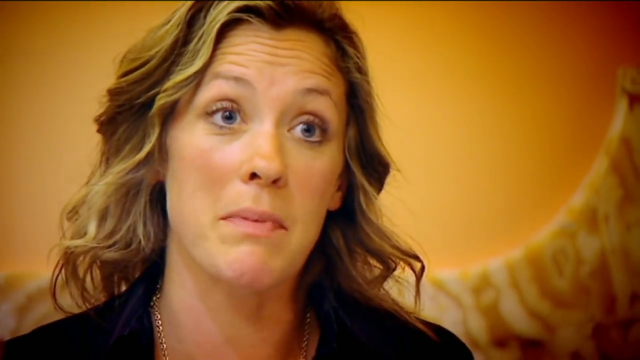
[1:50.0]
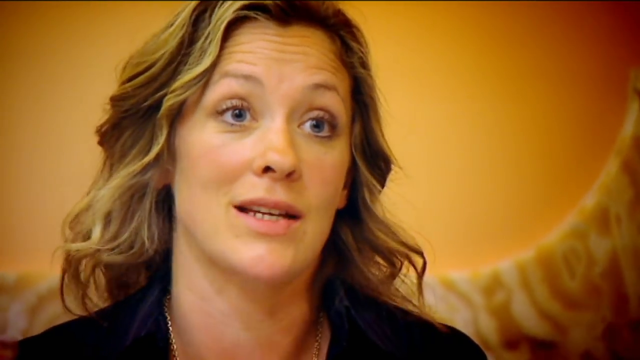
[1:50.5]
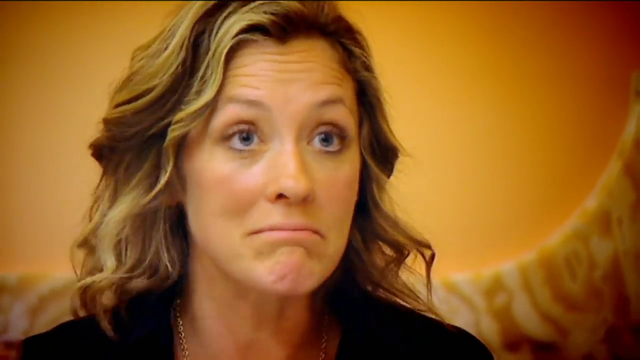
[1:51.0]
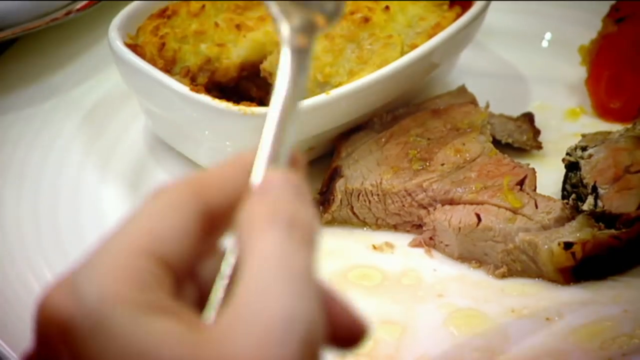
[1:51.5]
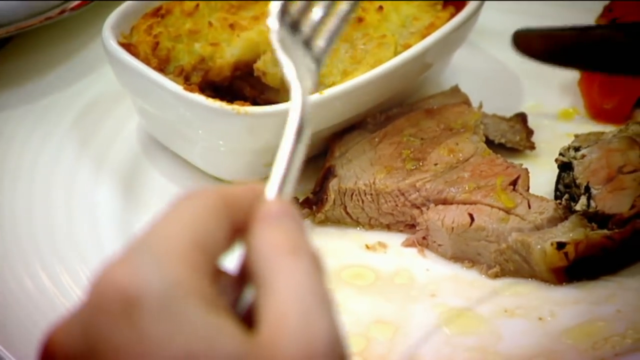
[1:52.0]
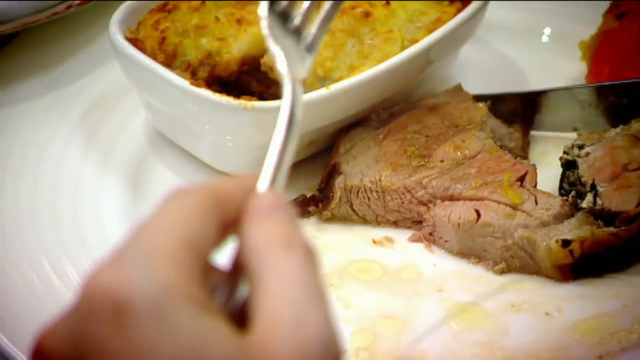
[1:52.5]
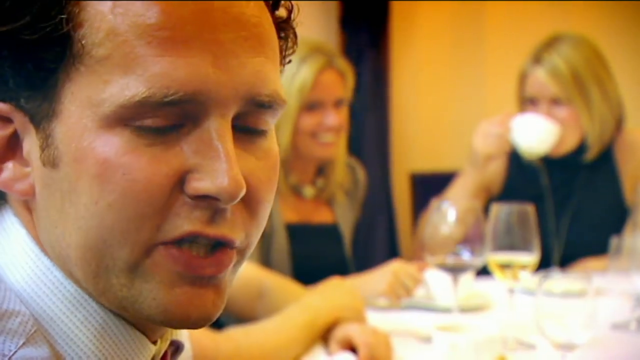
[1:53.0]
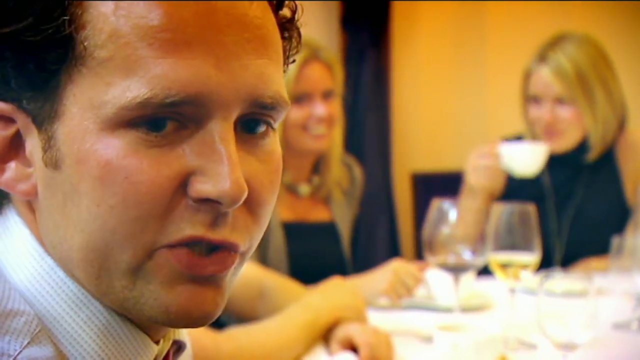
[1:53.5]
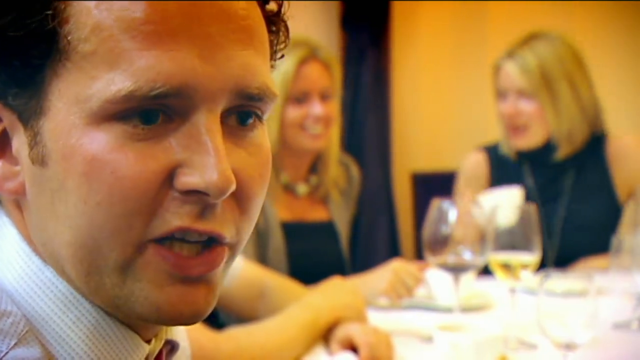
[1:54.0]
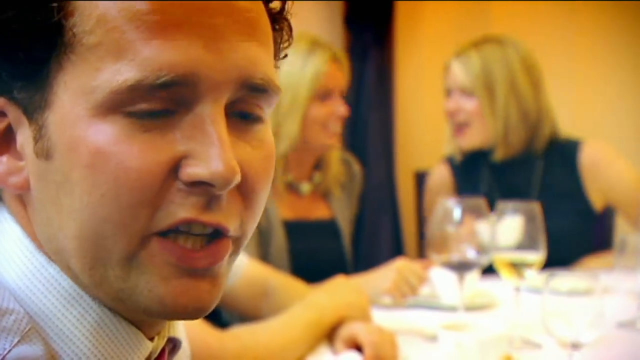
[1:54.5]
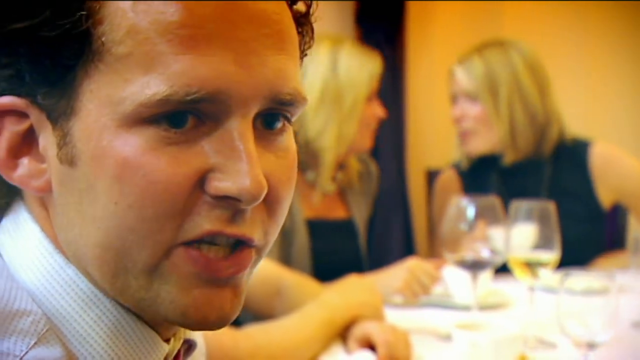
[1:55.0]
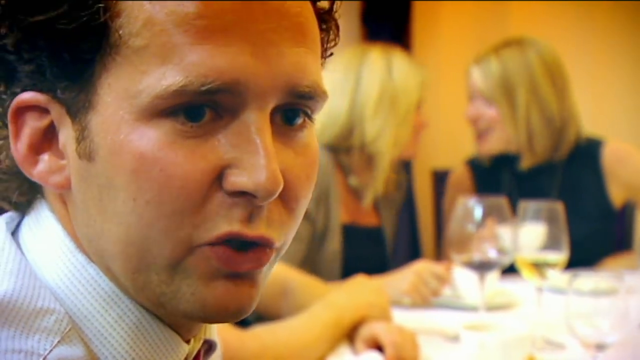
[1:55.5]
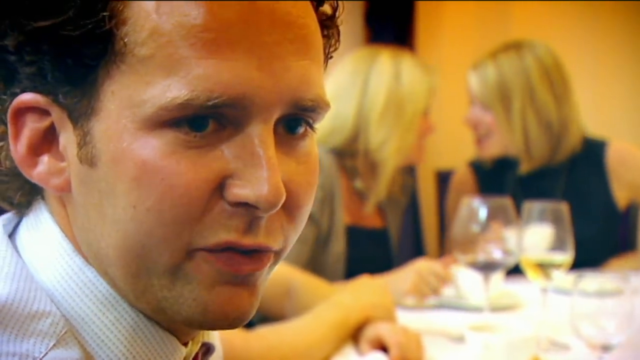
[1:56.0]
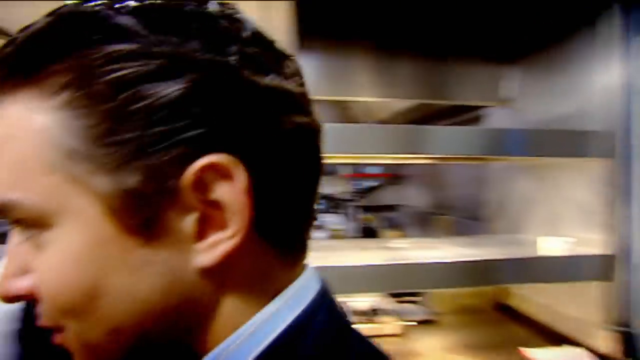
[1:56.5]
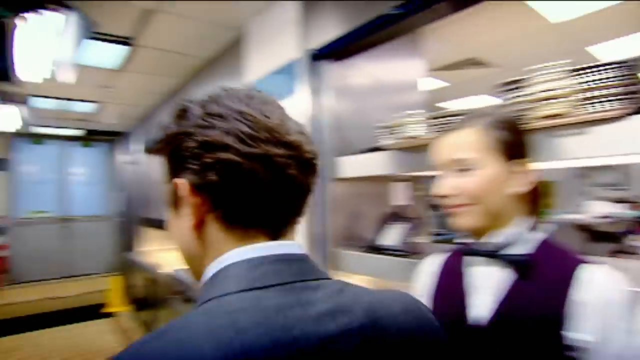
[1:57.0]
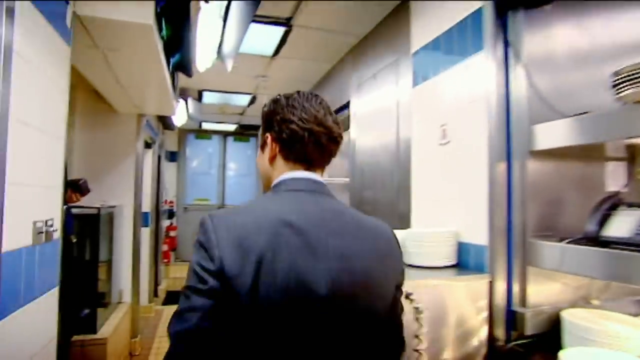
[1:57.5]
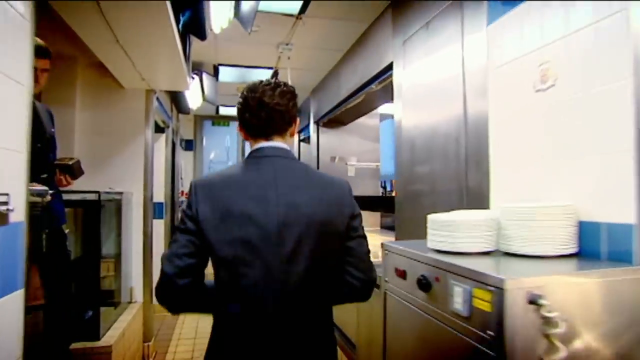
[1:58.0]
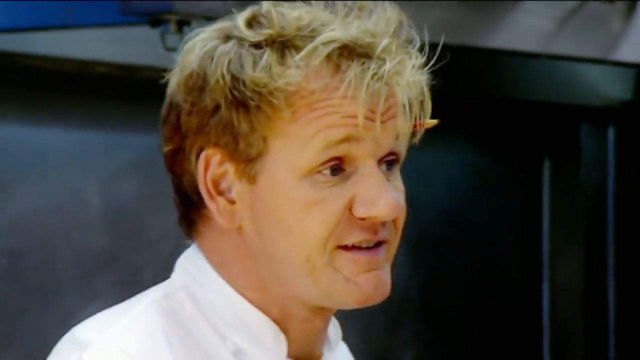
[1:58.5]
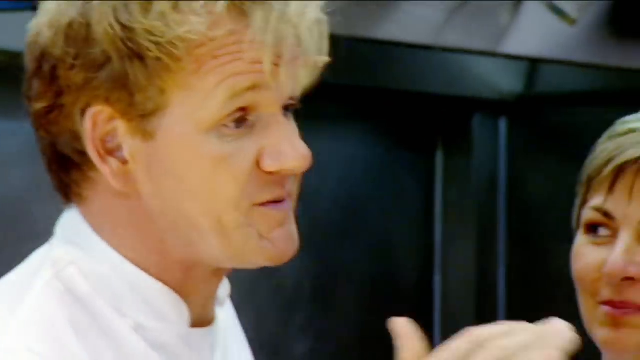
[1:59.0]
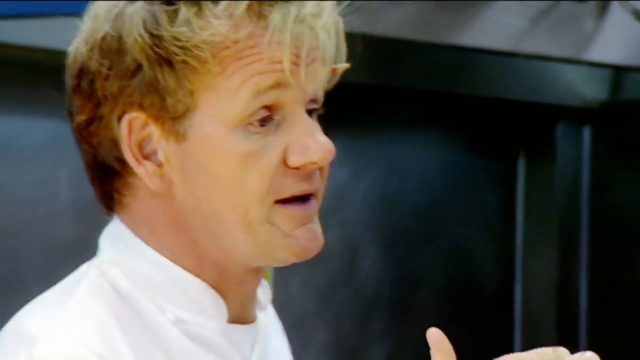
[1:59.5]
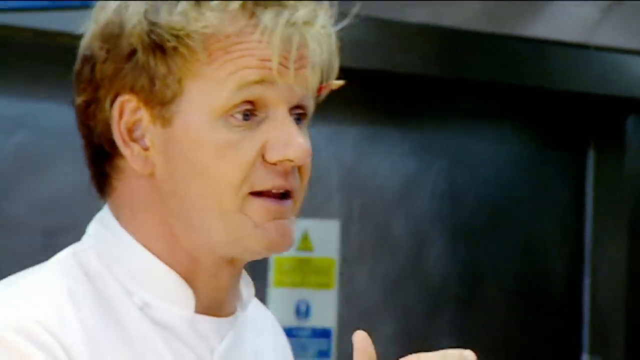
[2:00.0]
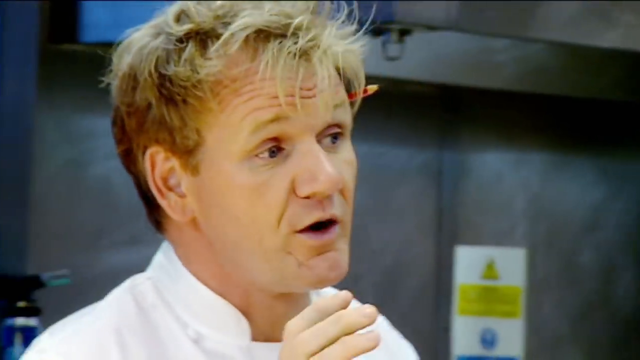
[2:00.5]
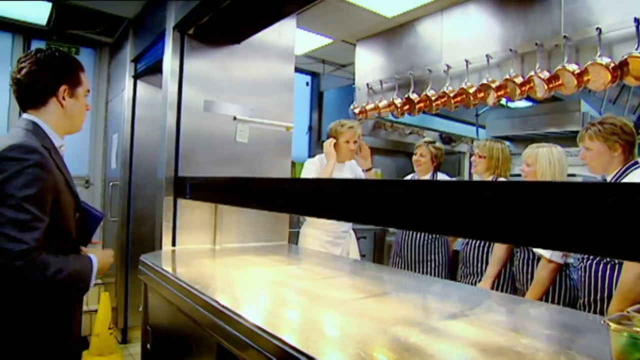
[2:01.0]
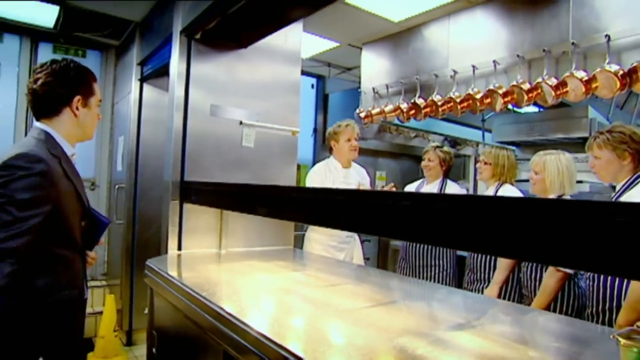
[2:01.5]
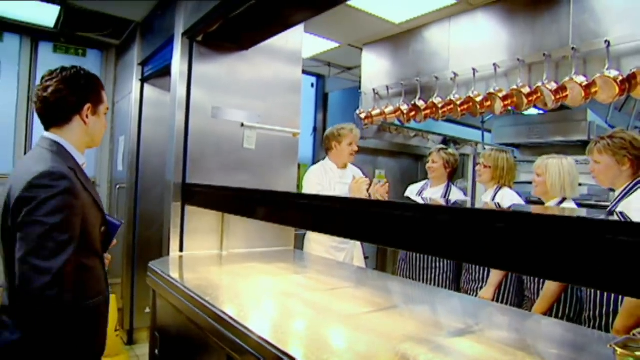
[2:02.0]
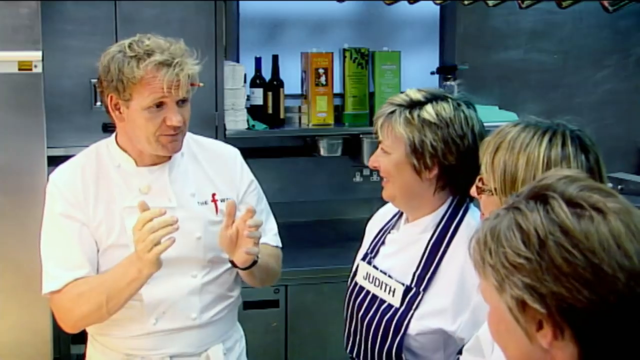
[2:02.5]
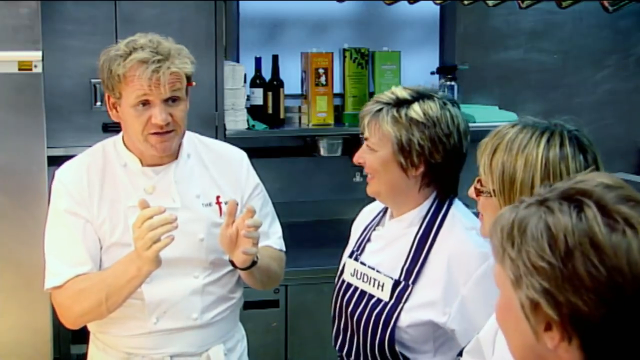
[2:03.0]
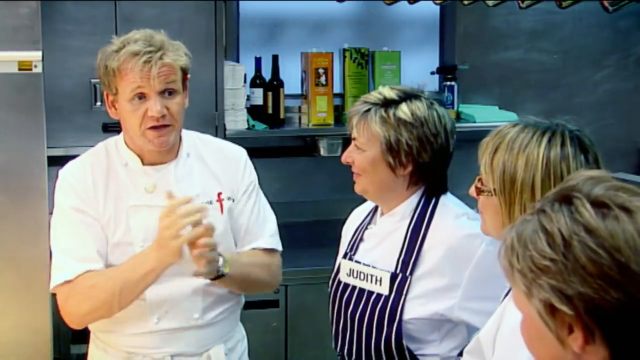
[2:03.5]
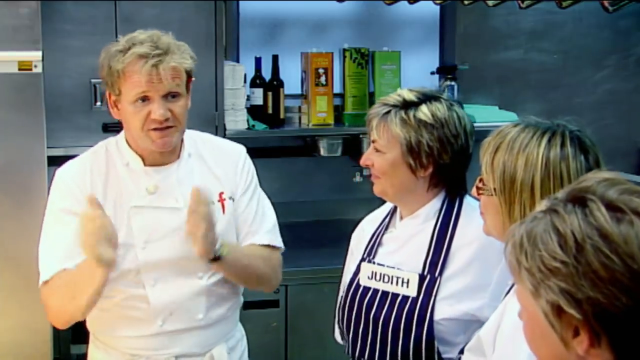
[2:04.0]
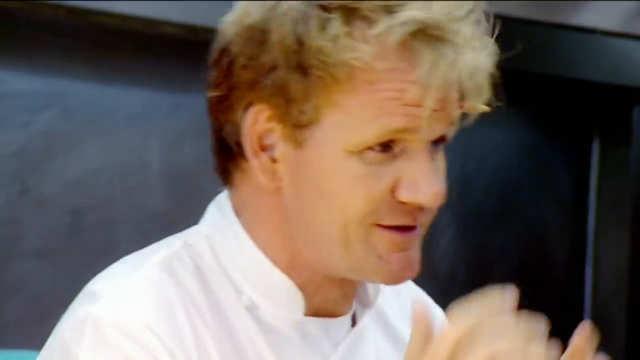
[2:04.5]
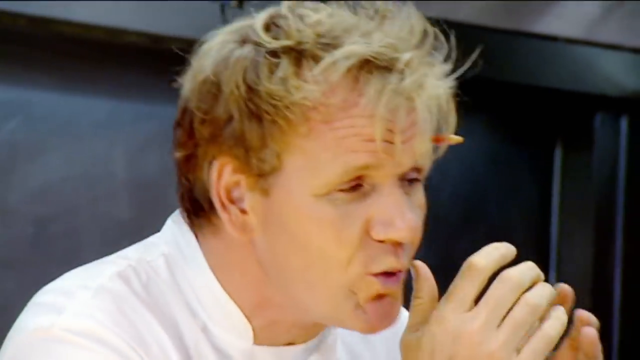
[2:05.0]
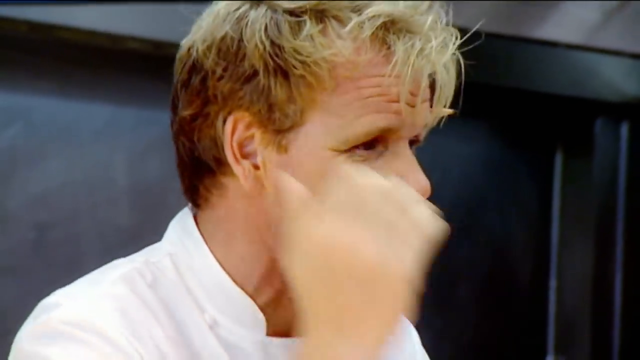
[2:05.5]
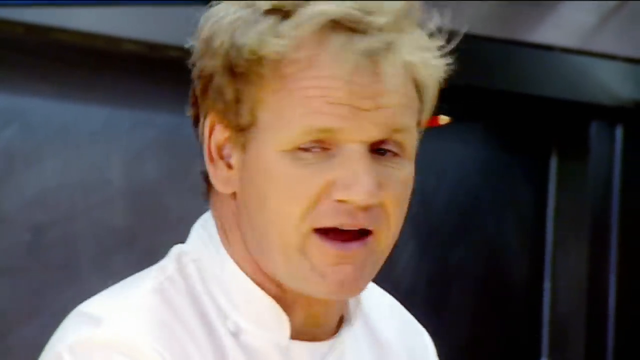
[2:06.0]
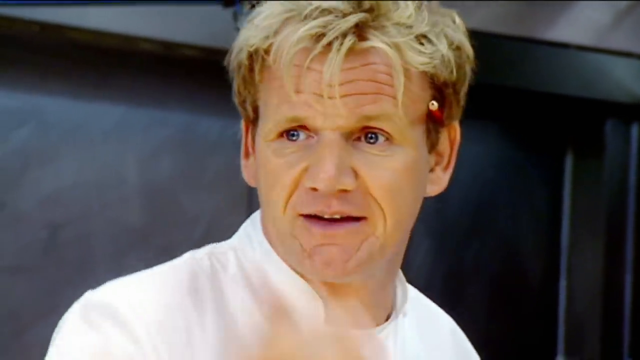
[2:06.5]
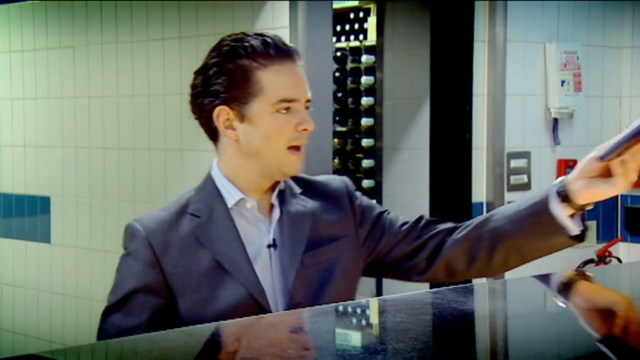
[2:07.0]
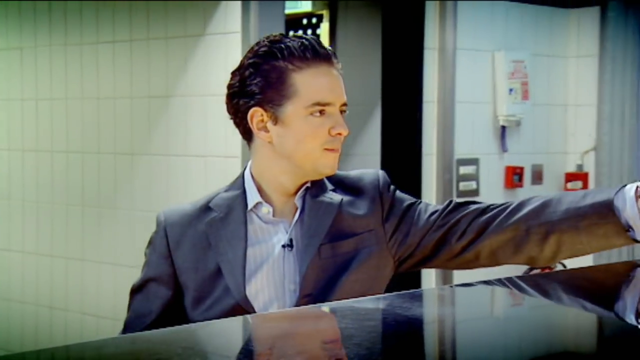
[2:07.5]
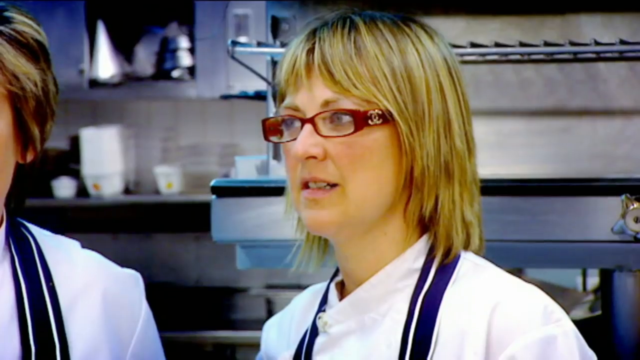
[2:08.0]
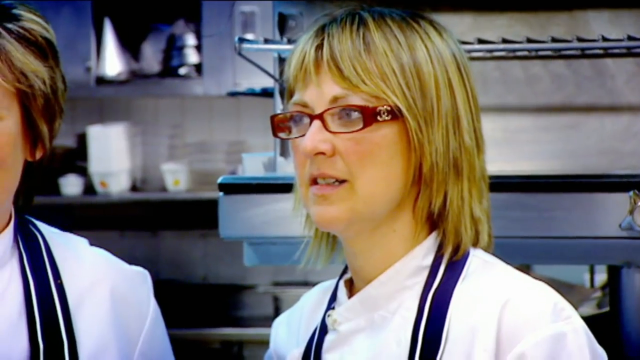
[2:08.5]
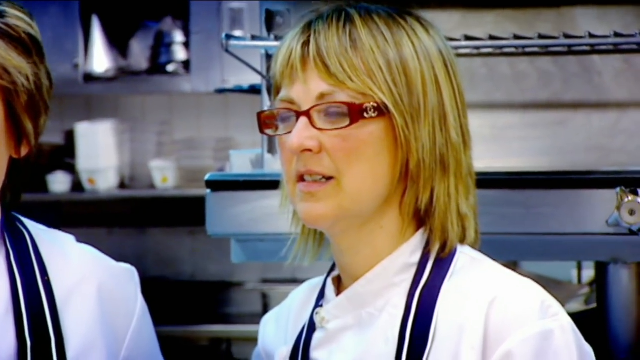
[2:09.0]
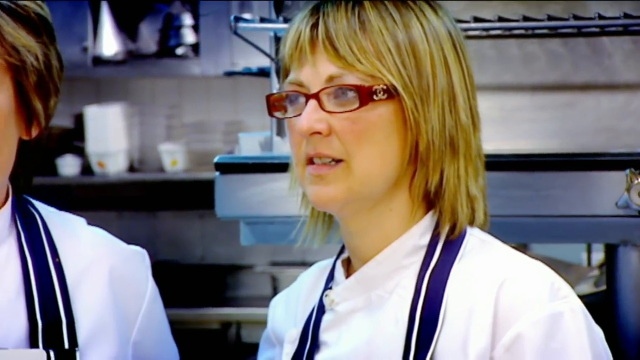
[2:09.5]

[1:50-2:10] A woman talks, giving reviews of the food at the restaurant. People eat in the restaurant, someone cuts the meat, and people are interviewed and talk. A man dressed in a suit, who looks like the manager, walks into the kitchen and talks to the chefs. The head chef explains something and gives instructions, and everyone laughs, as if he is a very funny man. The man in the suit hands him a book, which he takes and starts to read.